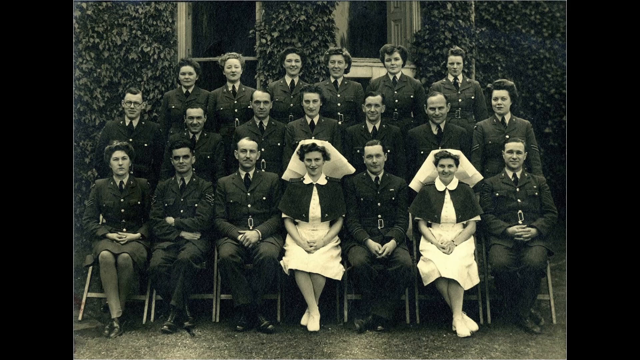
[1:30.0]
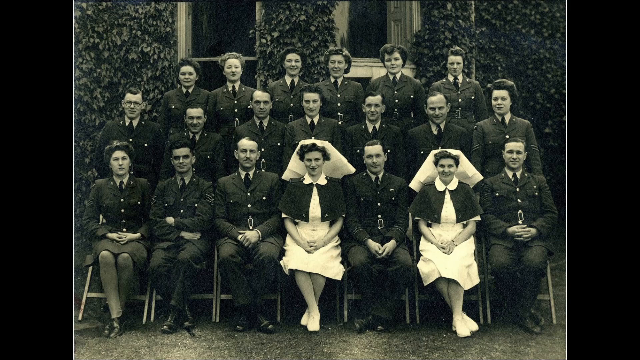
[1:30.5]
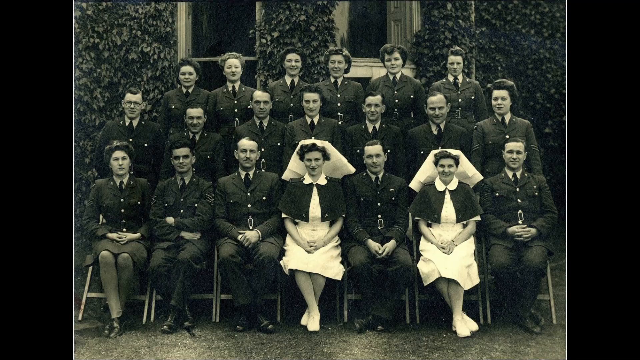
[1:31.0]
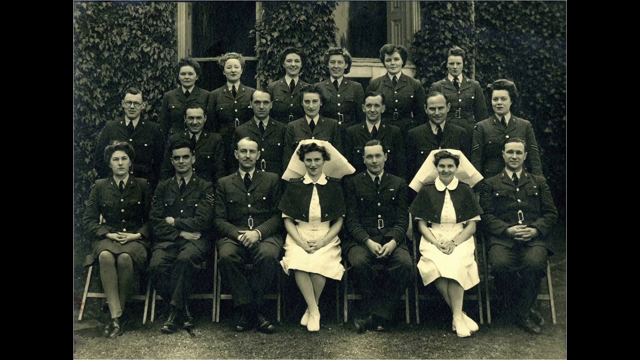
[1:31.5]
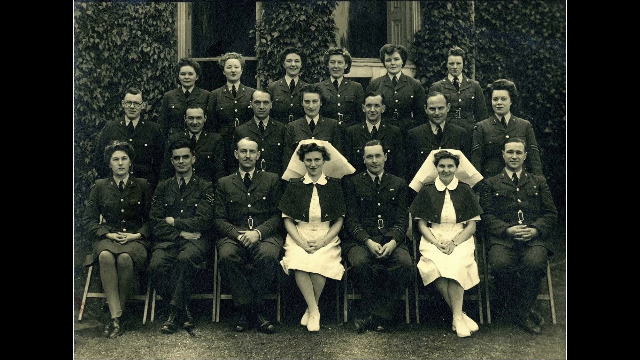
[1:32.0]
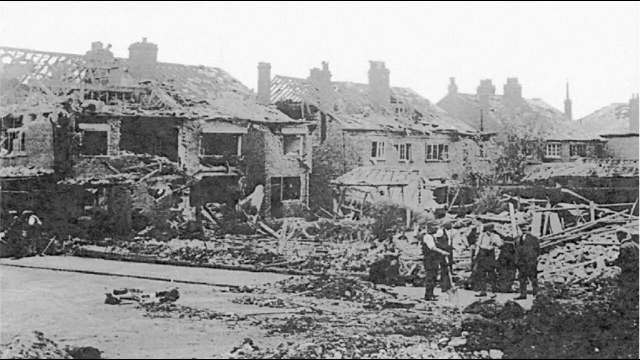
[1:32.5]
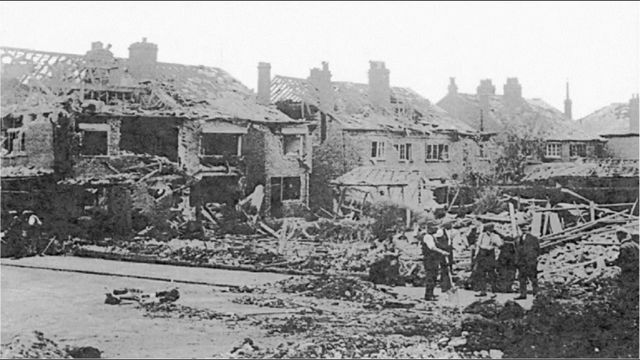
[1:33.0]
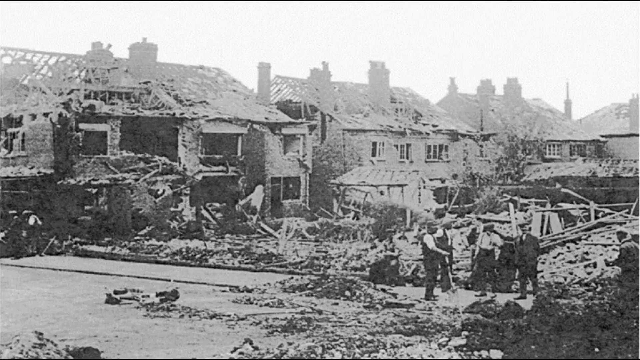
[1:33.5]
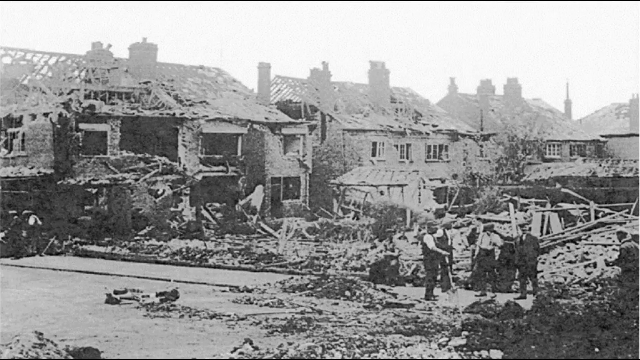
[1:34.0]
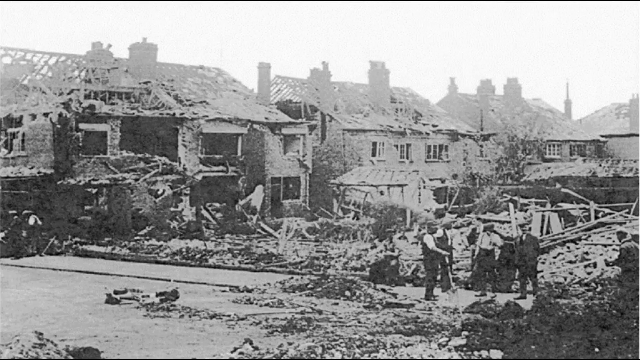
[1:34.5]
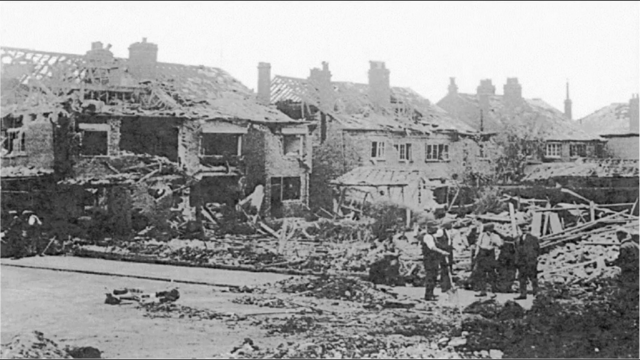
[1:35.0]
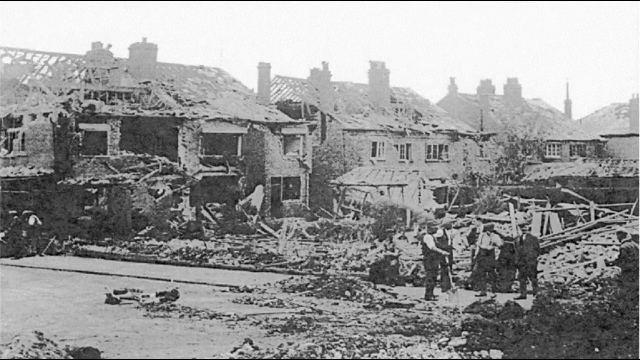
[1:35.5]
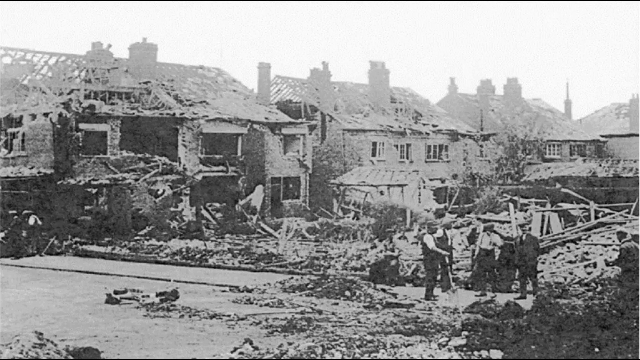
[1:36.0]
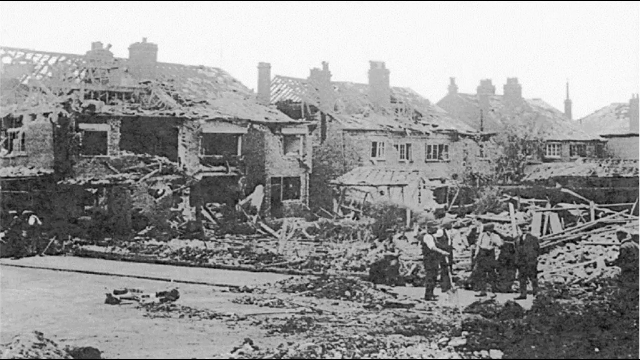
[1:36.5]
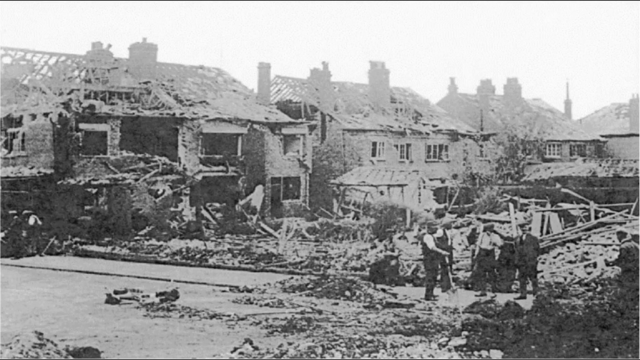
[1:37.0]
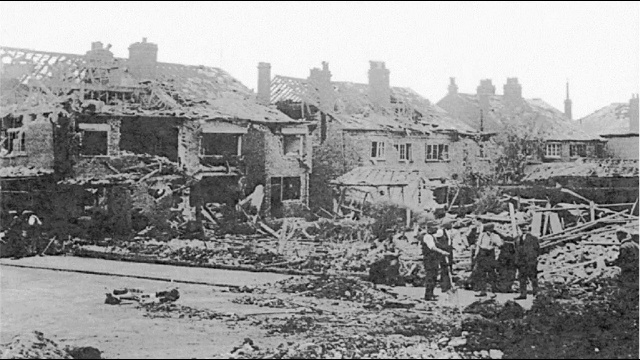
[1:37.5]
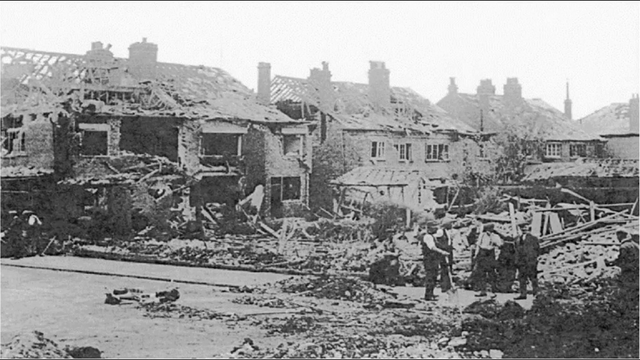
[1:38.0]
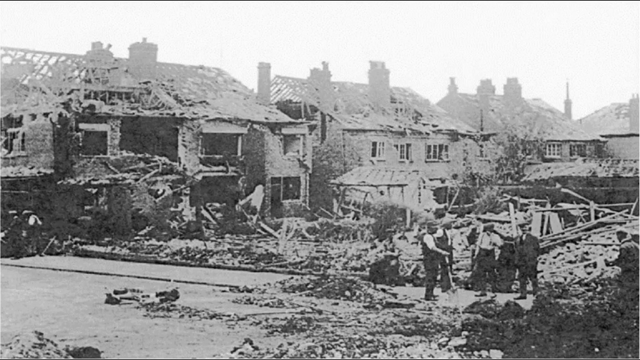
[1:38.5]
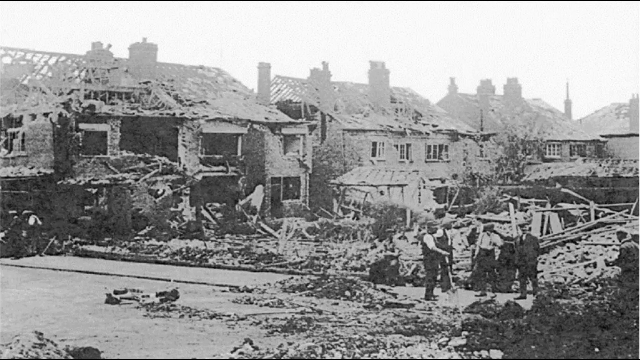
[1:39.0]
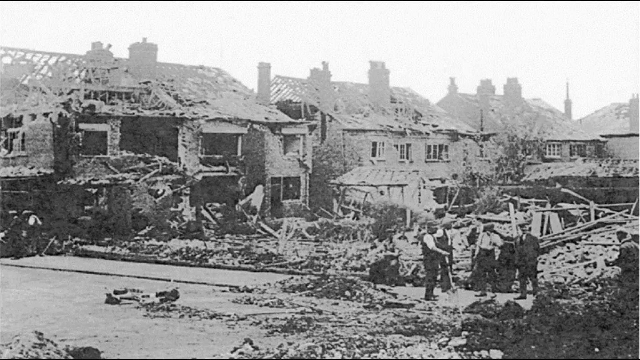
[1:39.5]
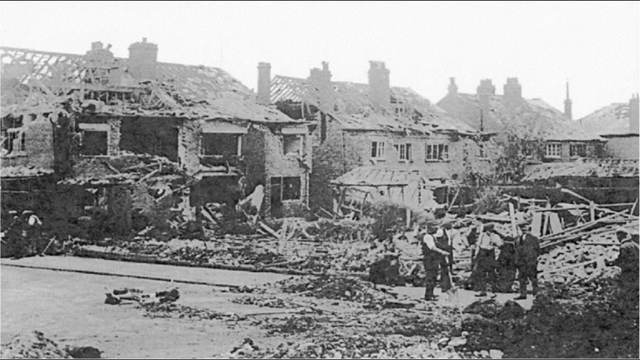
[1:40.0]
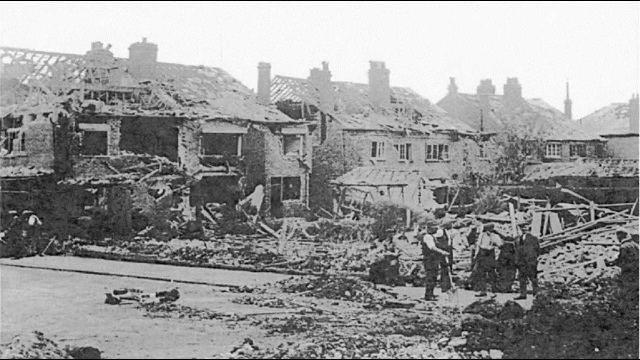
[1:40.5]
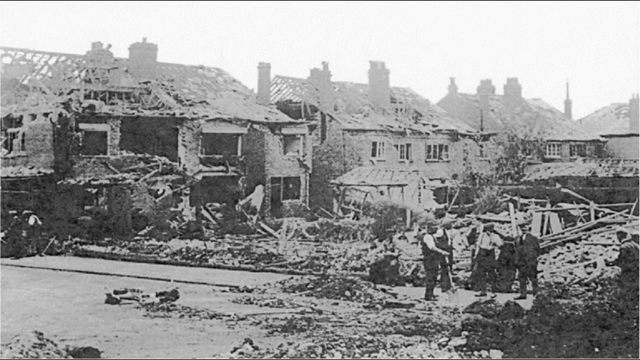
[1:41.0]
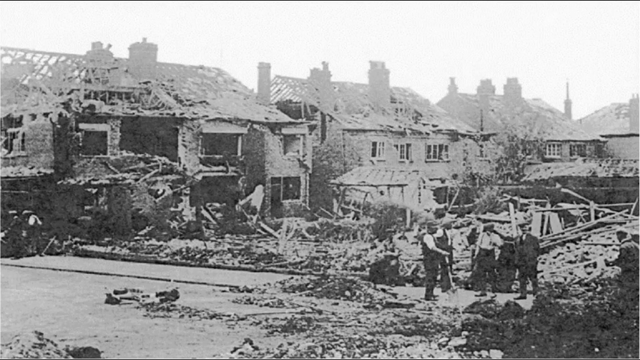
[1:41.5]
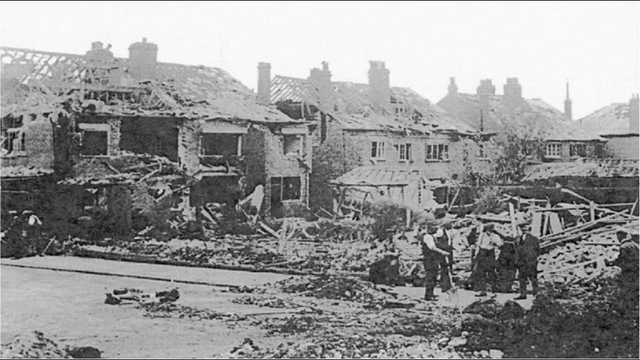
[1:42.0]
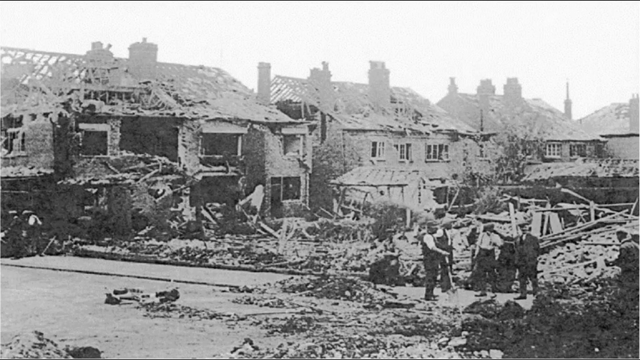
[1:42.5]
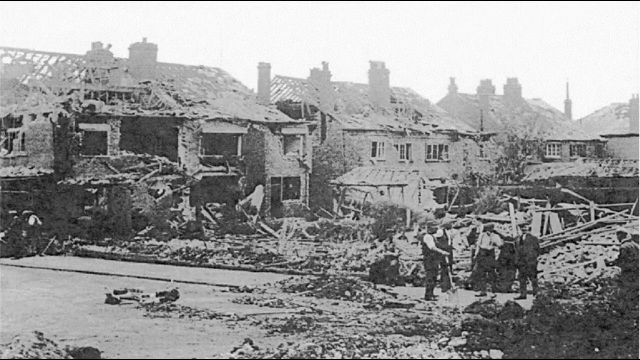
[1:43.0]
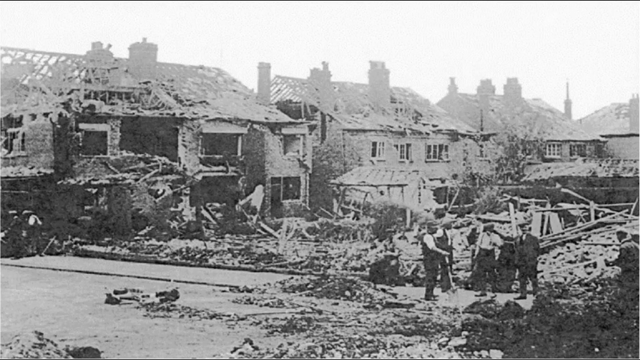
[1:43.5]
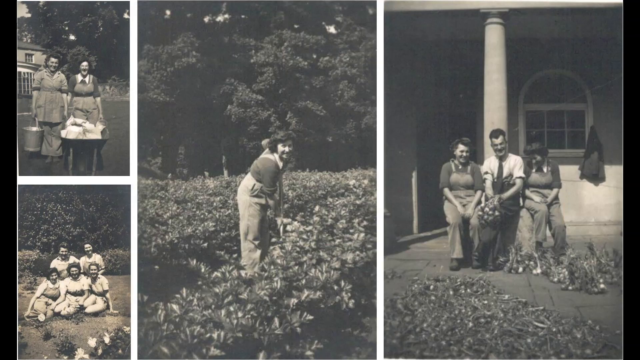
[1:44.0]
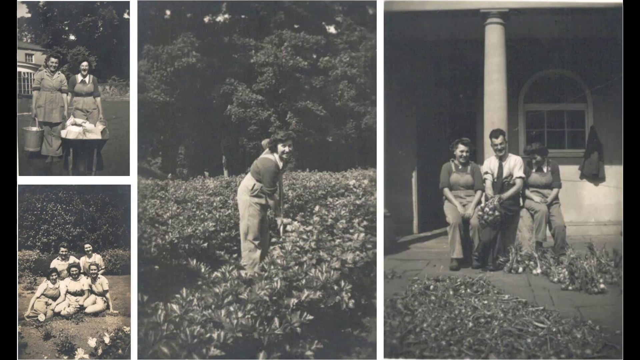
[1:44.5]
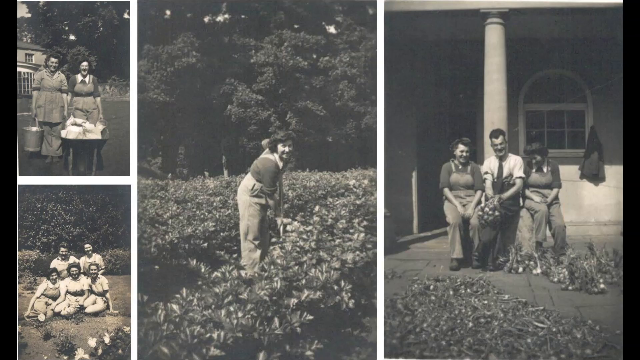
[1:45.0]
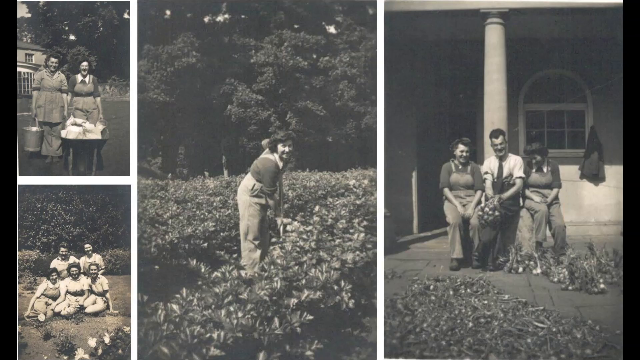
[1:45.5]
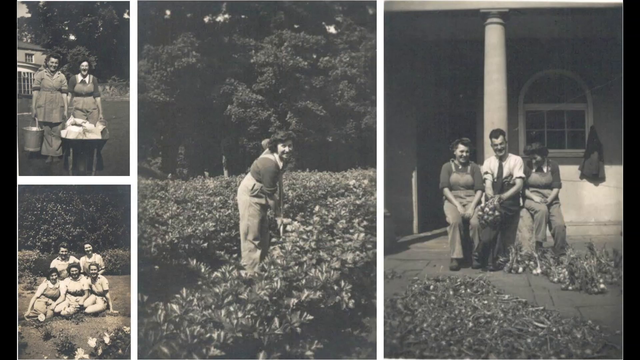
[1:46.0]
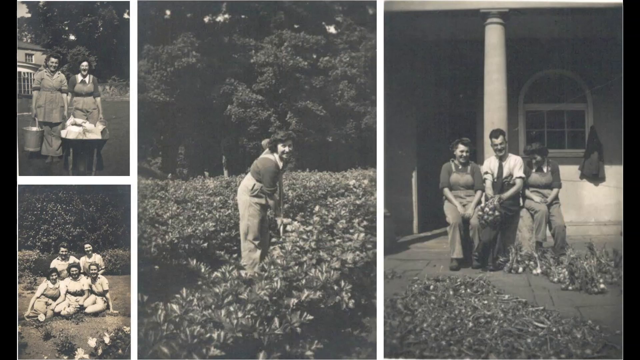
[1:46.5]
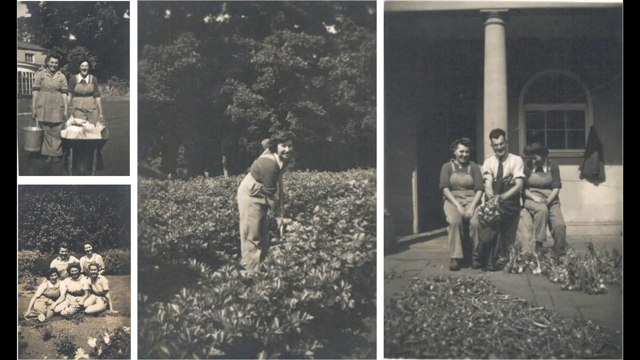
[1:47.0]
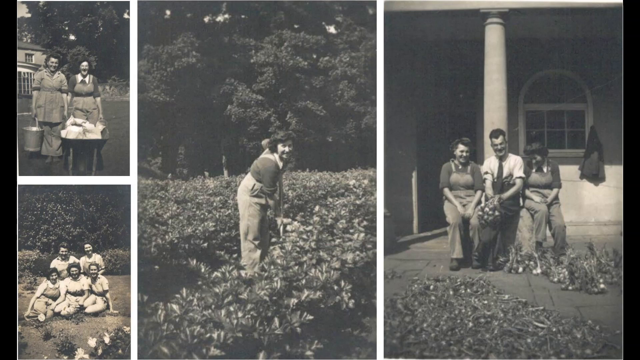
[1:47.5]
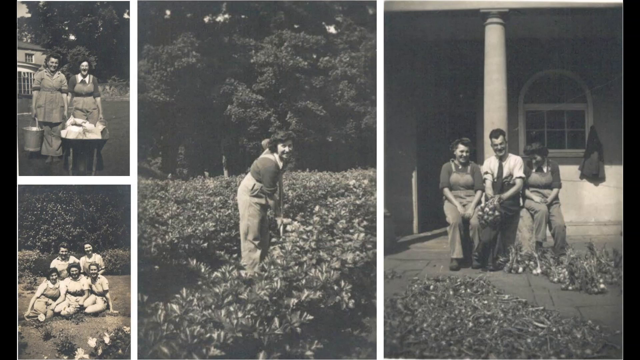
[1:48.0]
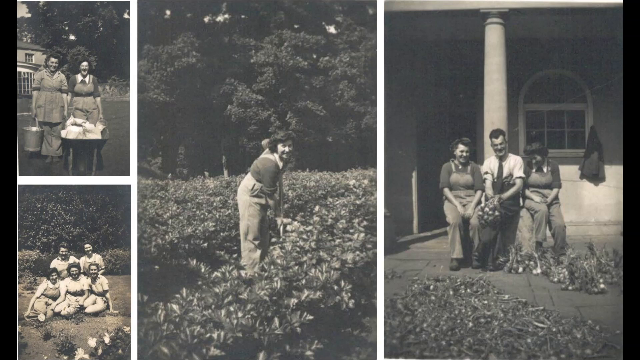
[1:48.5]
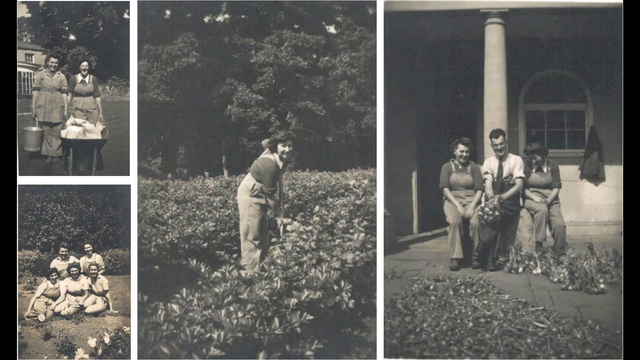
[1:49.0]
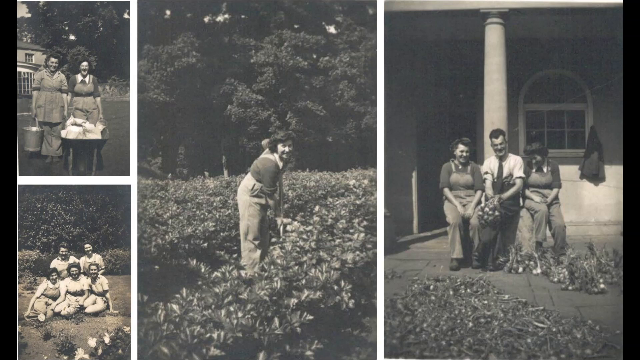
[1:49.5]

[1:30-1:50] A black and white photograph shows what is apparently a graduating class of men and women in uniform, arranged in three rows. The top row has six people, all women. The second row has five men and two women. The bottom row is sitting and has four men and three women. There is no writing on the photograph. Two women in the bottom row look like they have headdresses and white dresses and could be nurses, so this could possibly be a graduating class of nurses and doctors. Next comes a devastated town or village where many of the roofs have been torn off and two-by-fours and wood are everywhere, as if a tornado or possibly a hurricane has come through. Some men are gathered in the foreground; judging by their clothing, the scene looks to be from around the 1920s or 30s.